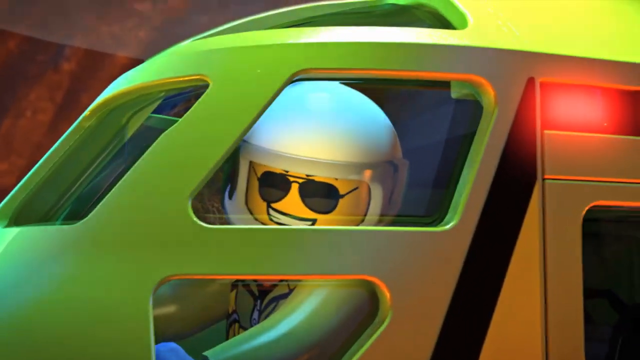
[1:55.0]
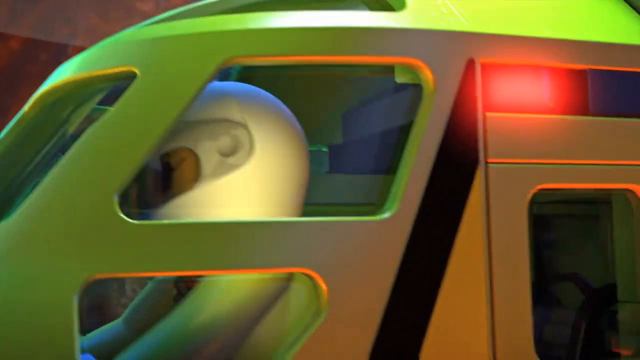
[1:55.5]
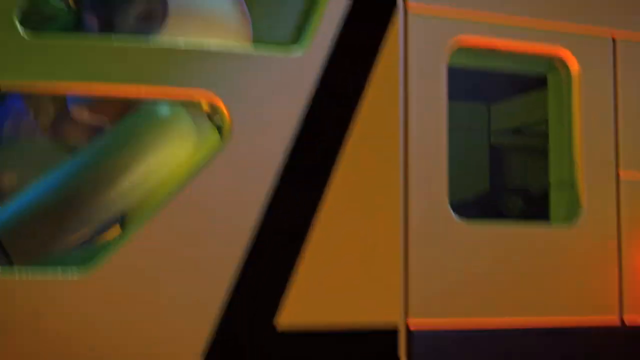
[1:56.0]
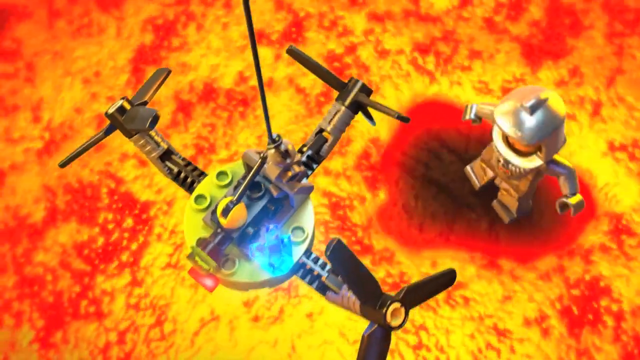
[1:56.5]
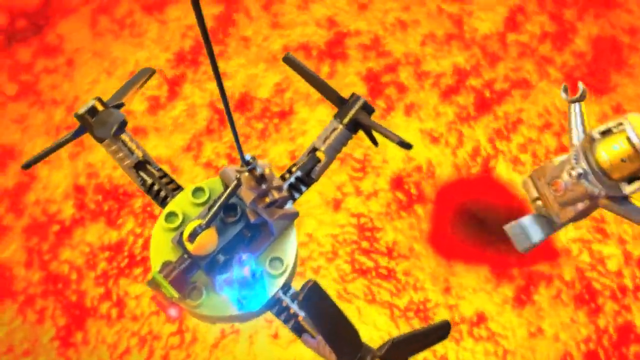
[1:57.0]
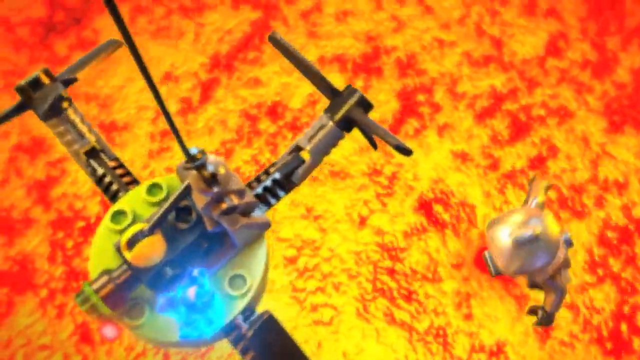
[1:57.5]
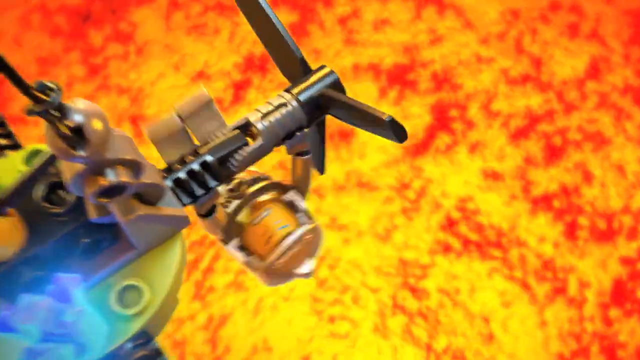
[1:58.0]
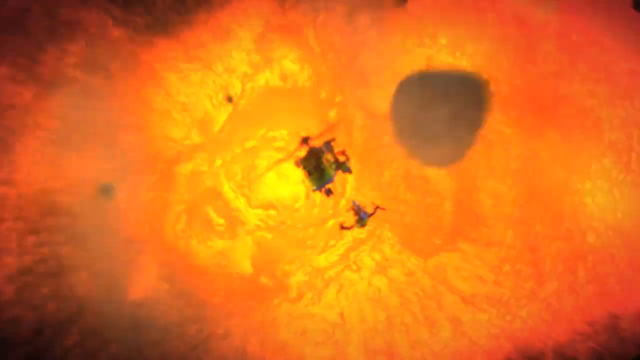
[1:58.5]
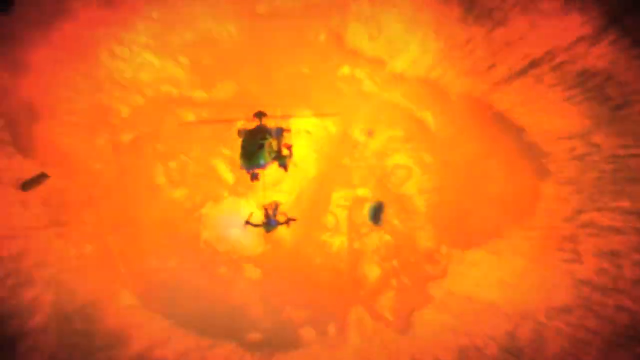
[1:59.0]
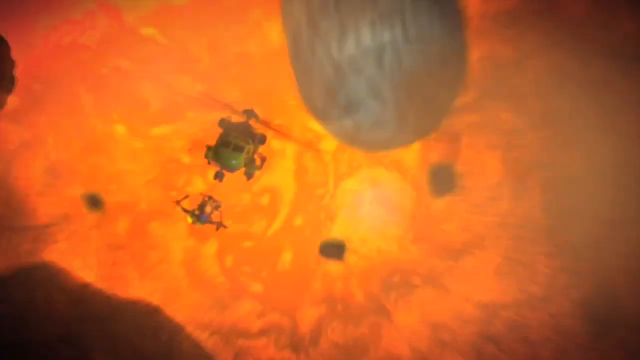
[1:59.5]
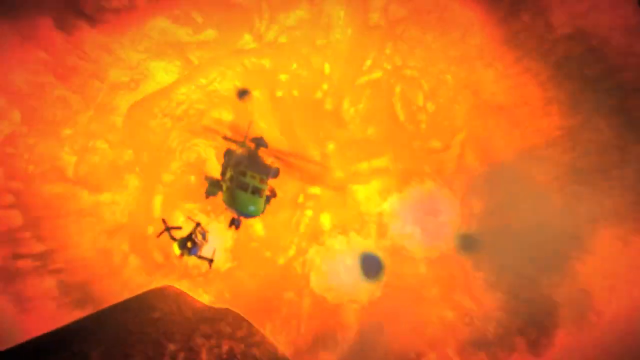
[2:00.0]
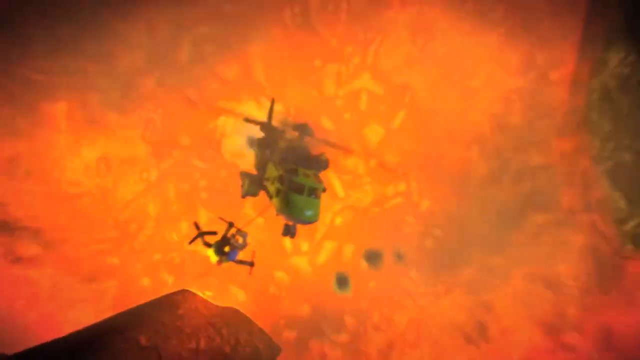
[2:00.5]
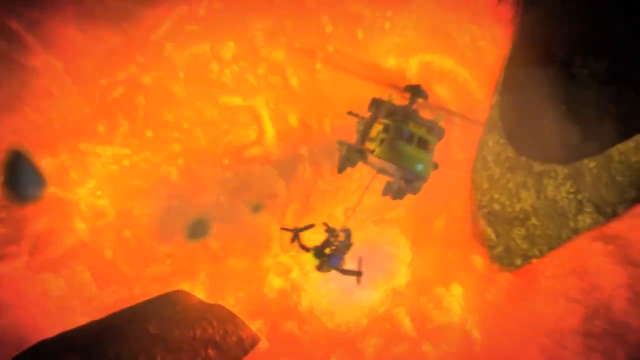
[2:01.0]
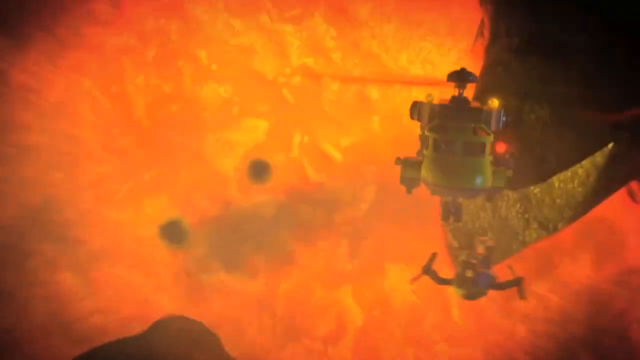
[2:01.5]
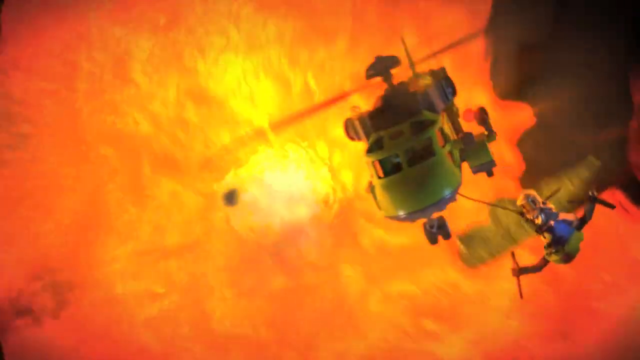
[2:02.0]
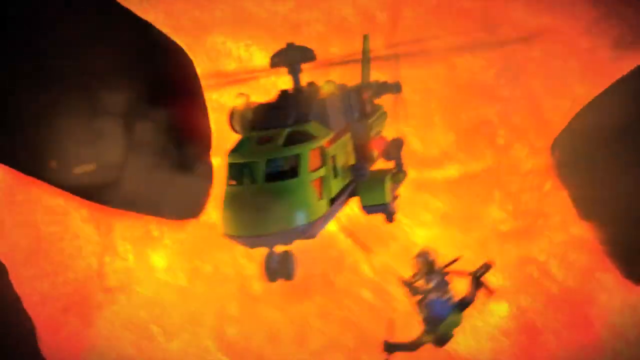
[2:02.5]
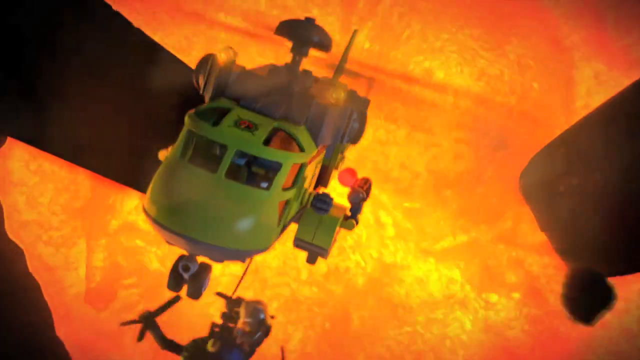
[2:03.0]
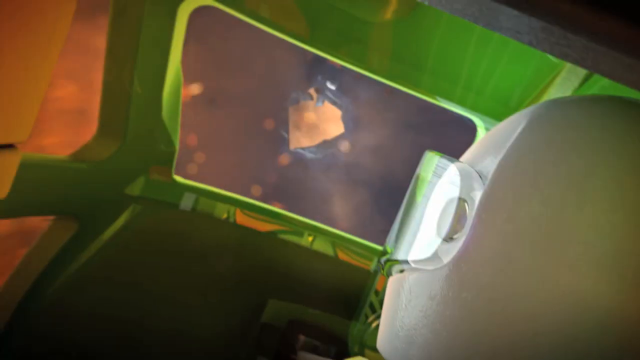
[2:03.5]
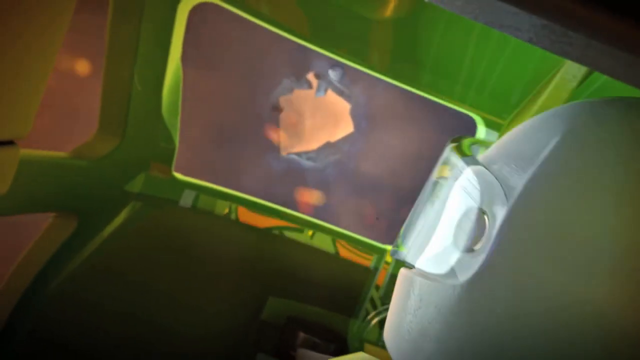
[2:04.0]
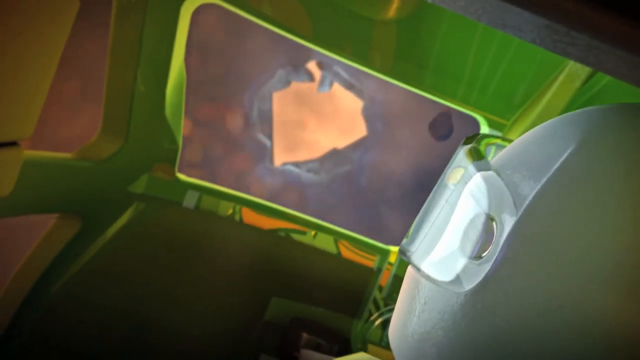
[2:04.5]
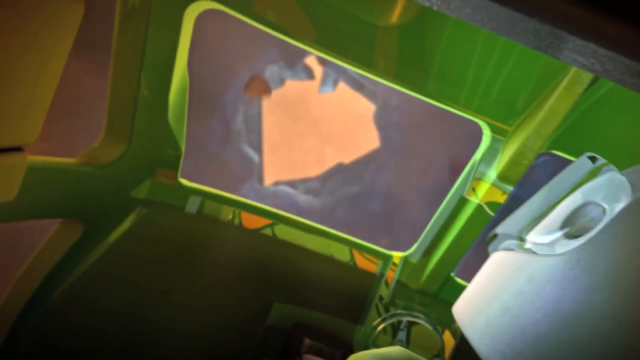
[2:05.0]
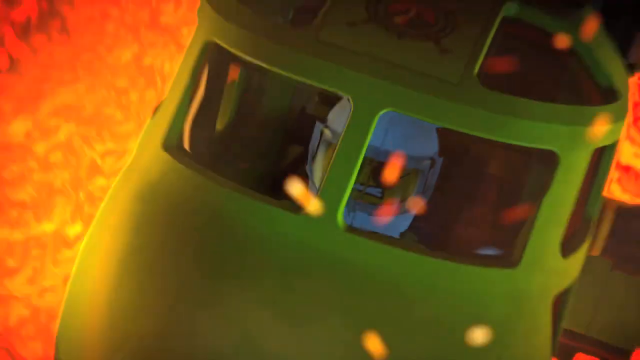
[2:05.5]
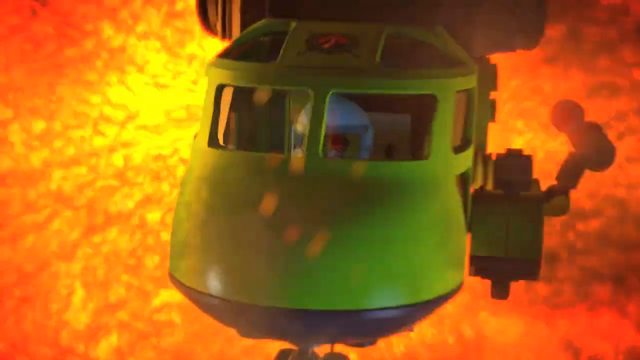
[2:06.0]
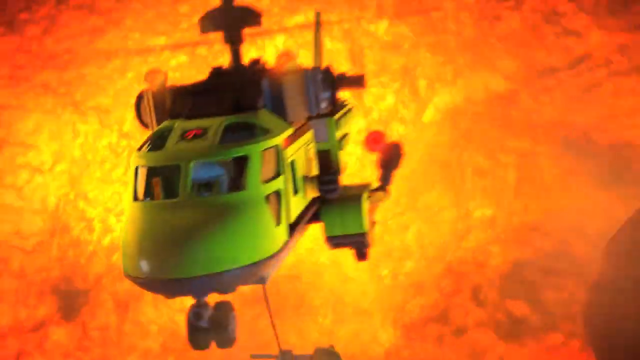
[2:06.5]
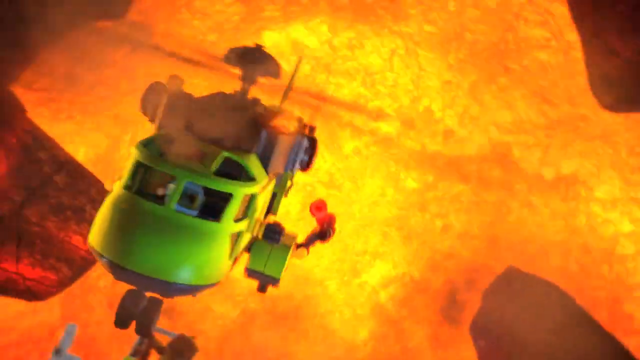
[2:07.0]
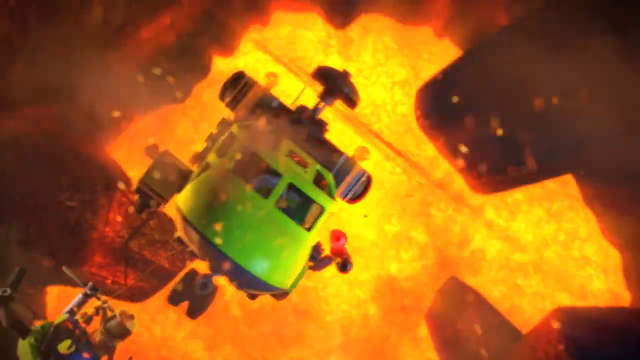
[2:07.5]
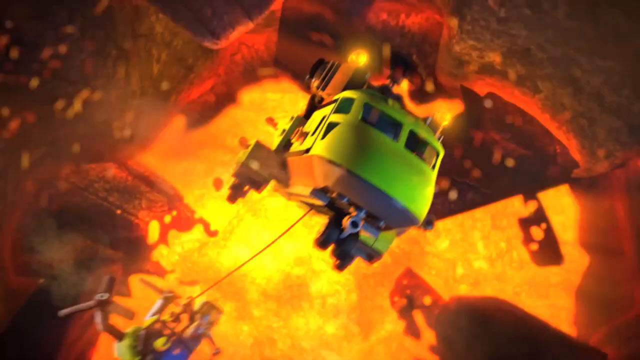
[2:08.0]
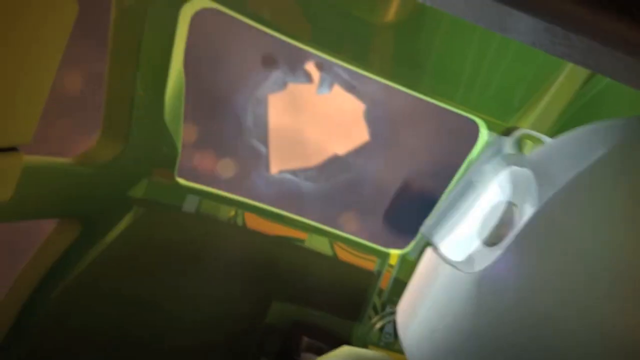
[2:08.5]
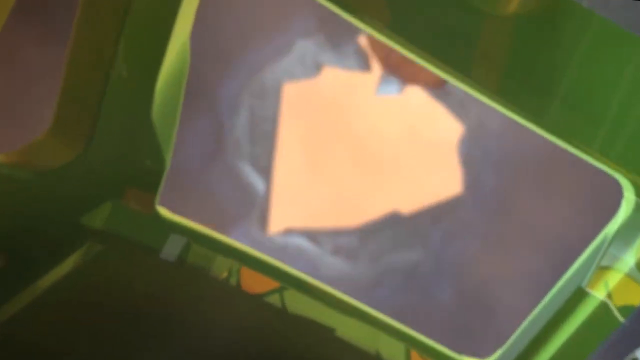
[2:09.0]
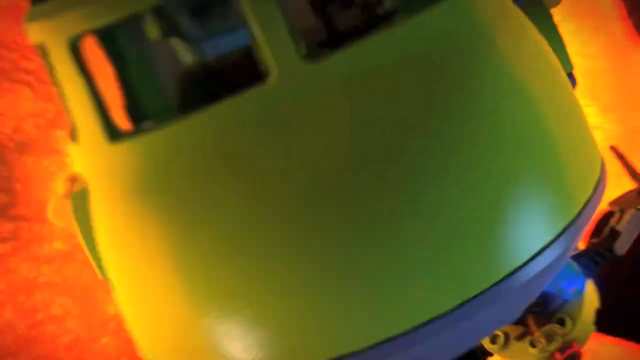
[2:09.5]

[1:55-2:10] An image of a little Lego man appears. The scene then cuts to the Lego man being rescued from the center of the volcano by the helicopter, which is hooked onto him as well as the drone. They escape as the hot lava begins to explode from below. Rocks and other things fall from the ceiling of the volcano, and they dodge them as they try to get out of the hole at the top before the lava reaches them, barely making it out of the top of the volcano.